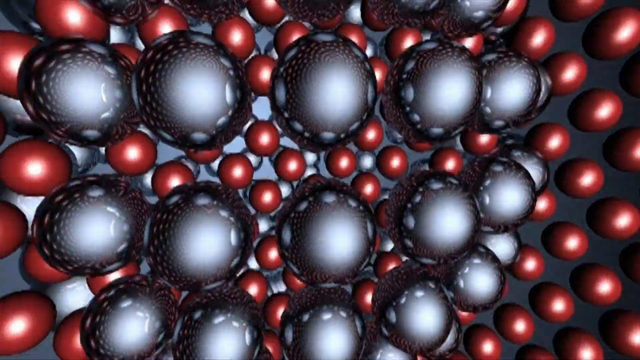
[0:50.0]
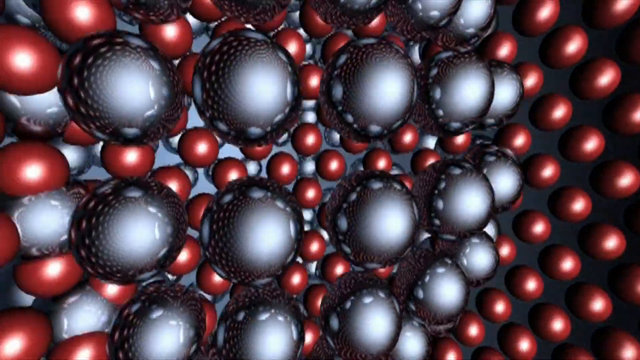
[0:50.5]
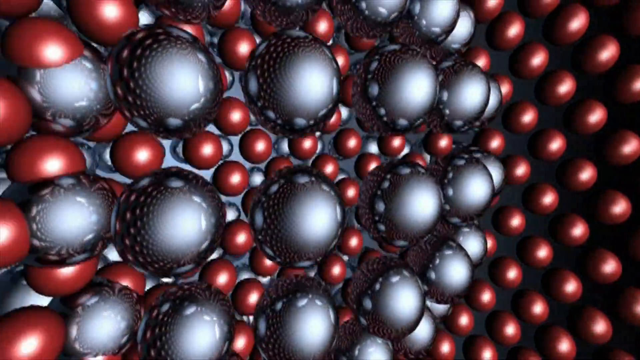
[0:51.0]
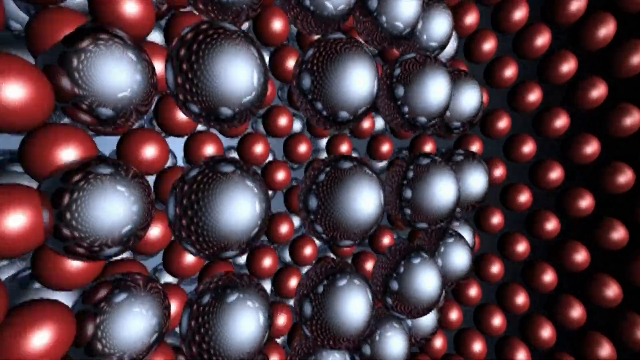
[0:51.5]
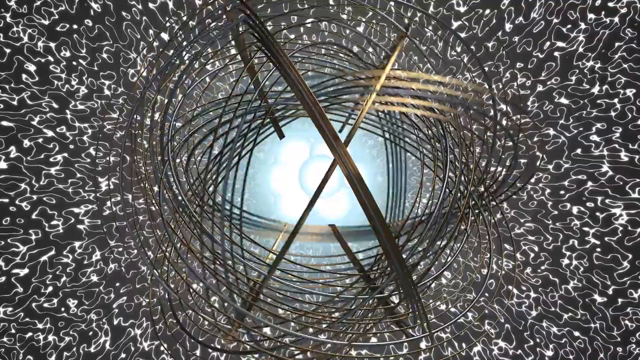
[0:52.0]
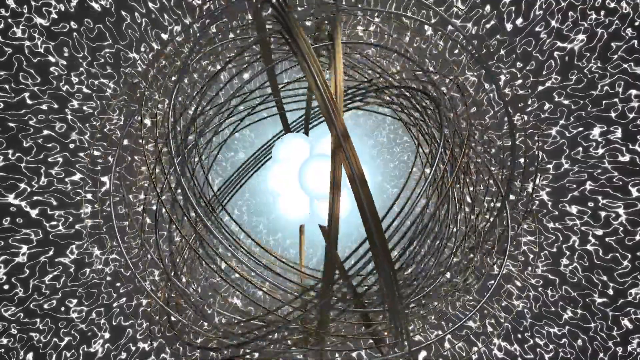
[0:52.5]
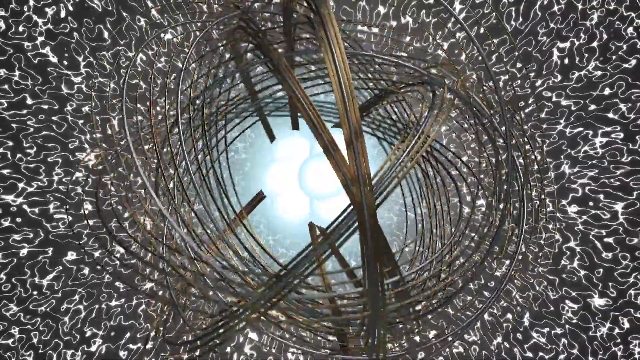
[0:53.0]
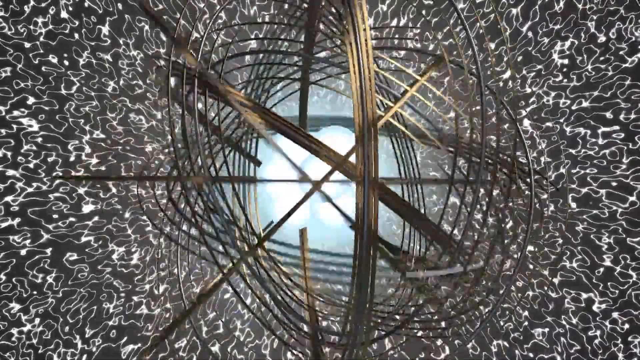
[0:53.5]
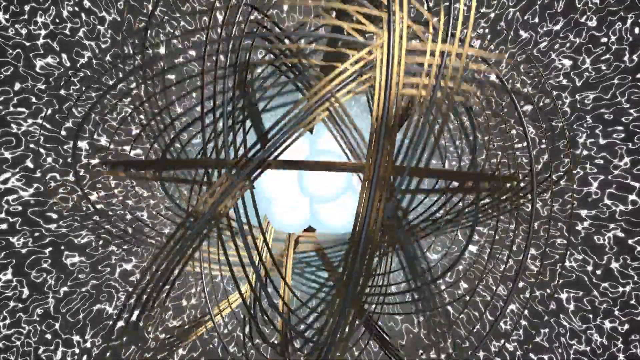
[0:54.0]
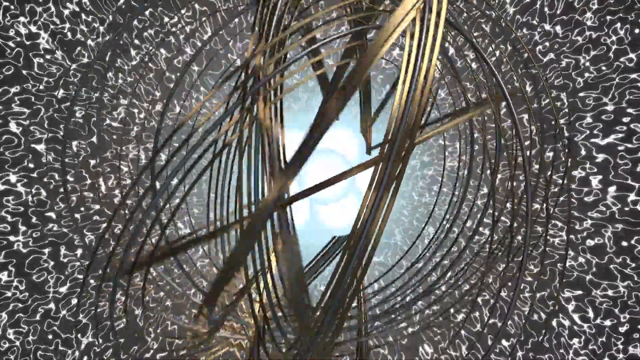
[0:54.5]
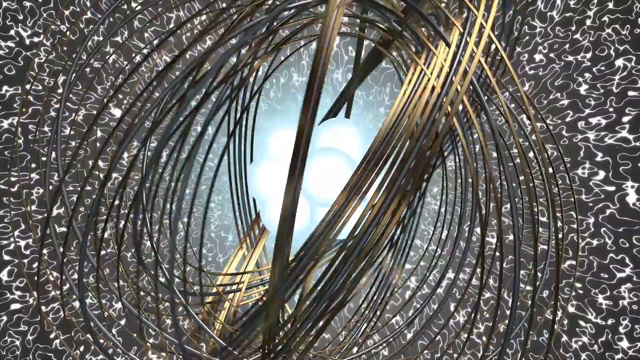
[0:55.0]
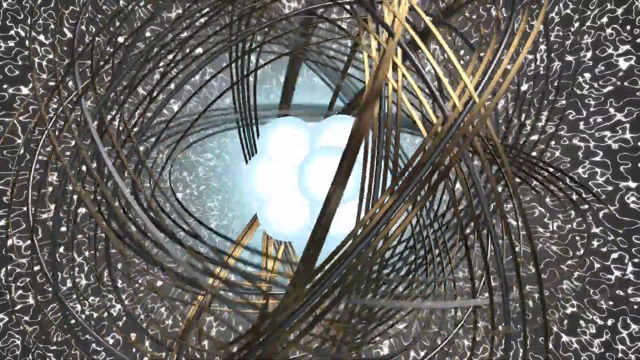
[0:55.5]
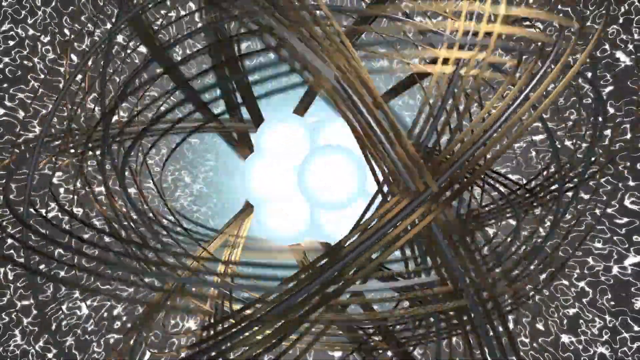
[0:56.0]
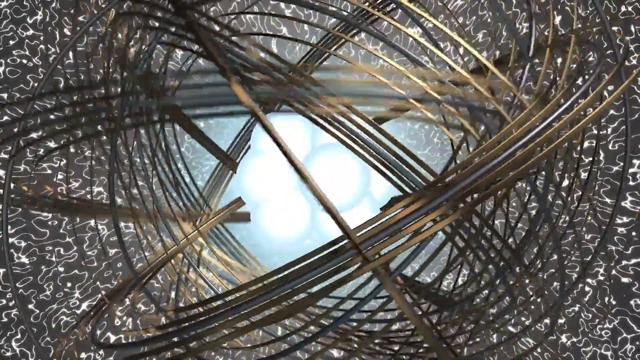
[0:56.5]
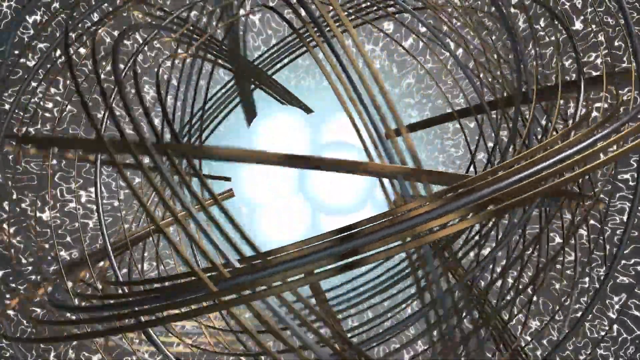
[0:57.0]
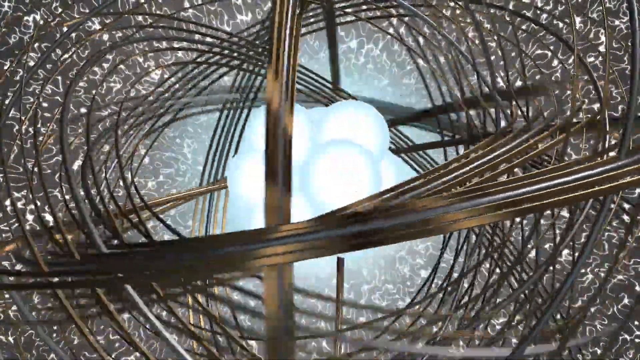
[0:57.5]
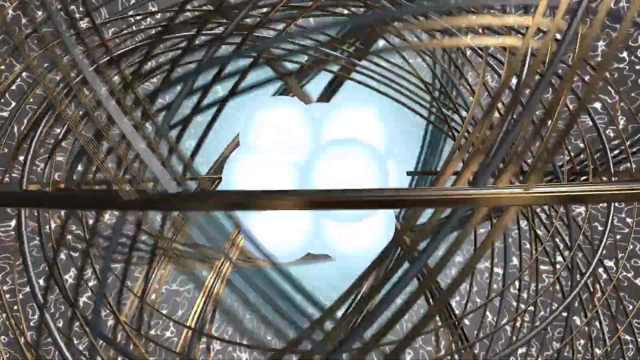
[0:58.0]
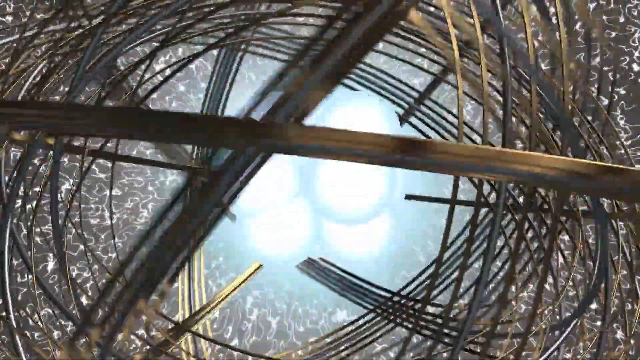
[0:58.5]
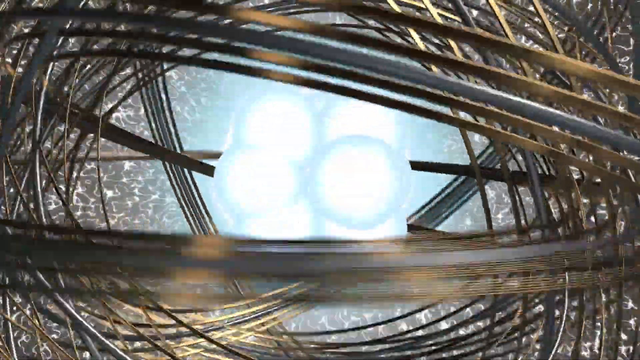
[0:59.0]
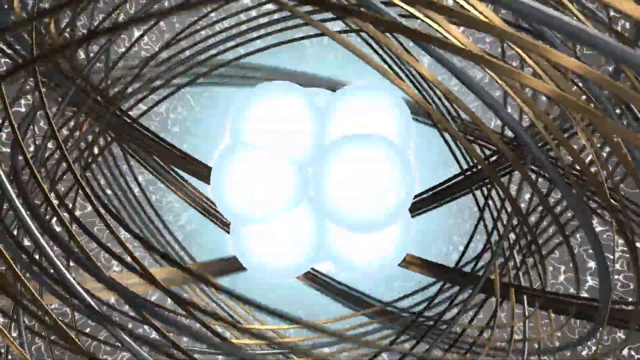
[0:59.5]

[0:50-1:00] The small red balls continue on a gray background, along with grayish-blue balls, six across, spinning in a circle. The red ones move left to right, continually coming in from the left, while the blue ones kind of rumble from right to left and go off the screen as they reach the left side. The video then cuts to bluish-white balls bunched together in the center, kind of like molecules, with a bluish-white hue coming off them. Copper coils go completely around them, spinning in circles and overlapping each other as if forming some sort of vortex, with a black and white border around the outer edges. The molecules rise closer as the coils also come toward the camera, and the light blue circles become easier to see as they get bigger; there are six of them. The coils keep coming closer and go off the left, right, top and bottom of the screen.